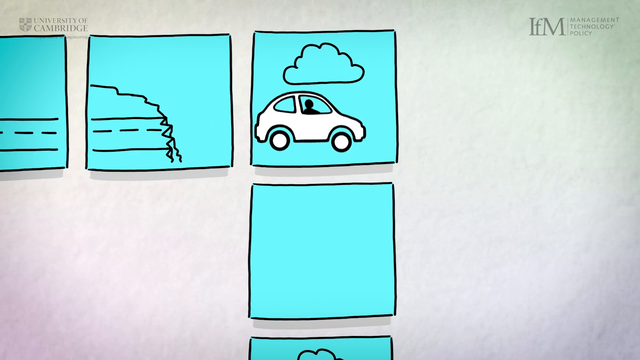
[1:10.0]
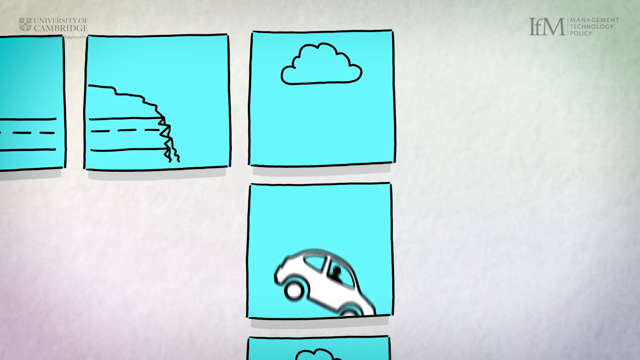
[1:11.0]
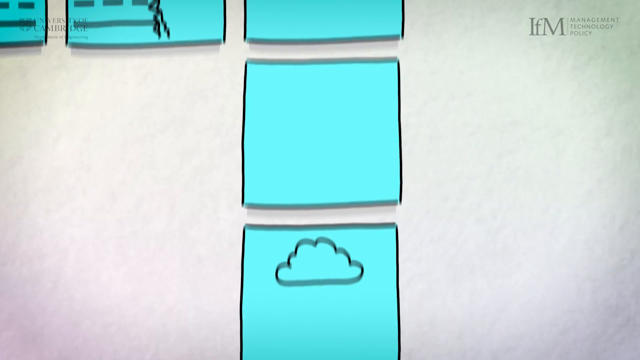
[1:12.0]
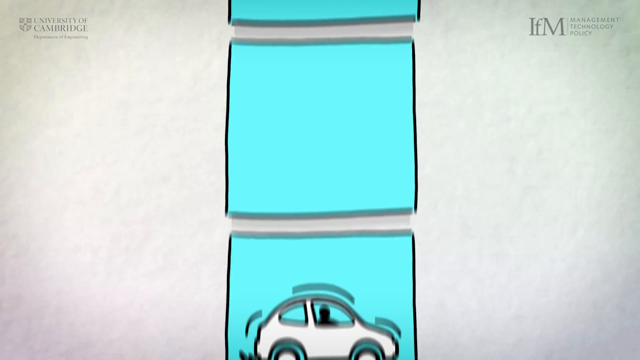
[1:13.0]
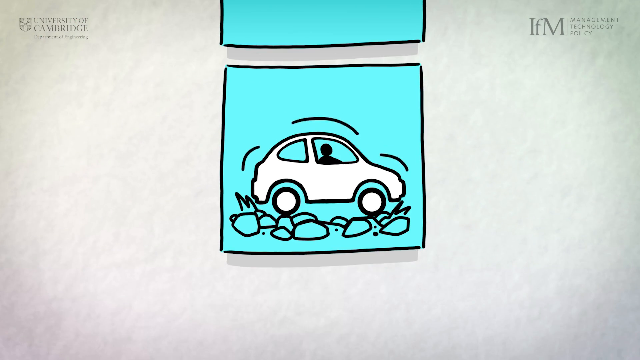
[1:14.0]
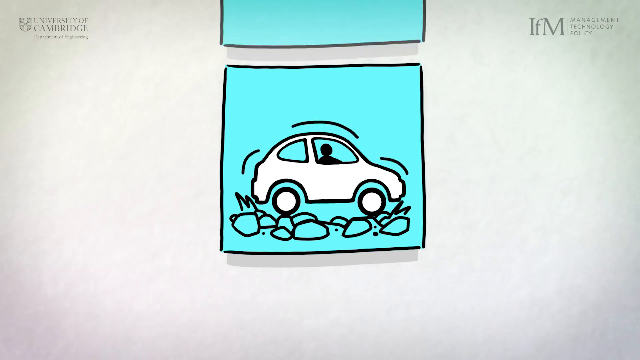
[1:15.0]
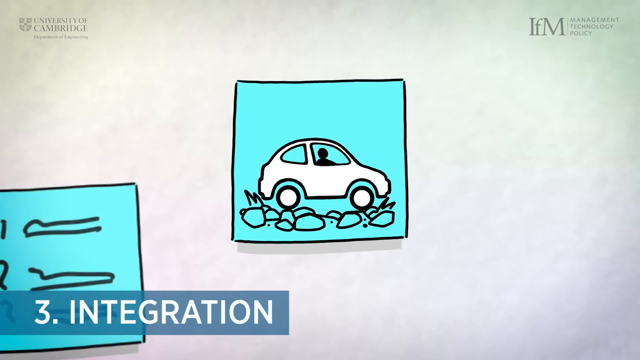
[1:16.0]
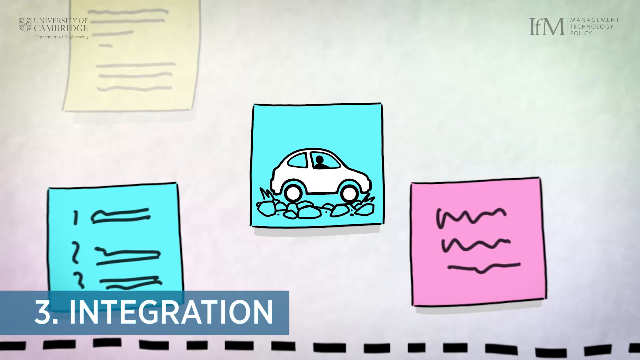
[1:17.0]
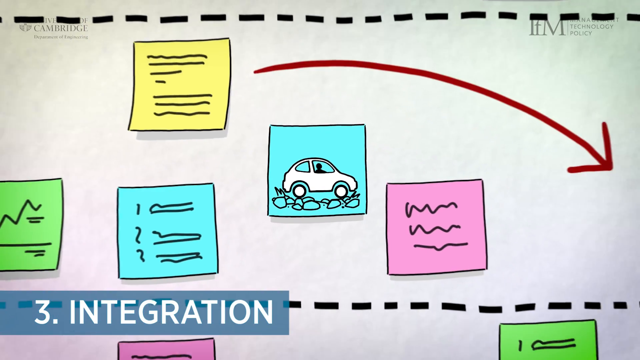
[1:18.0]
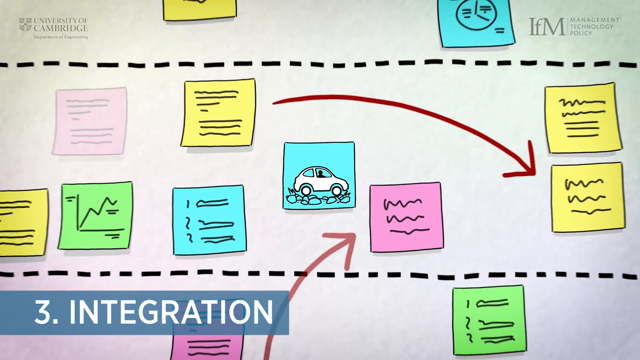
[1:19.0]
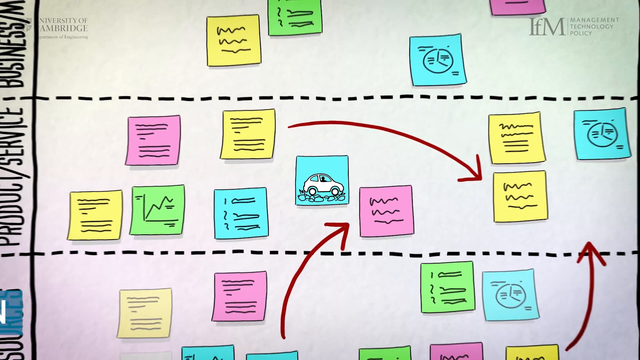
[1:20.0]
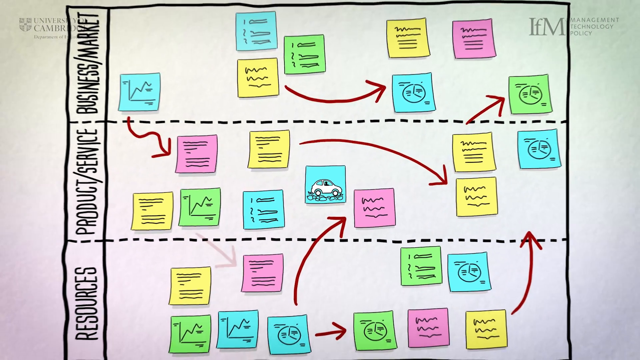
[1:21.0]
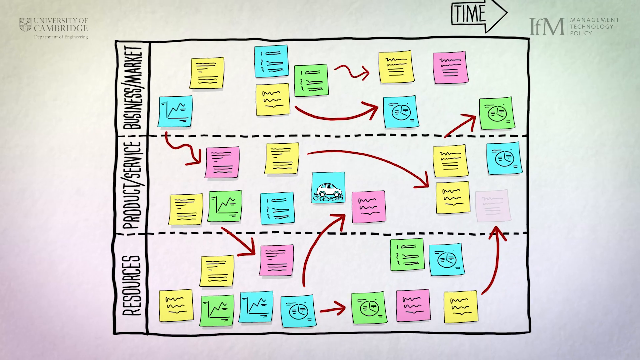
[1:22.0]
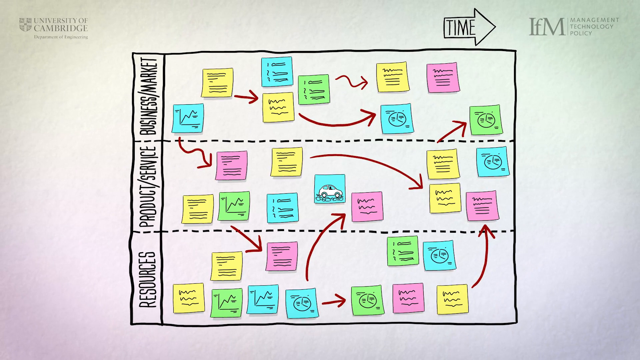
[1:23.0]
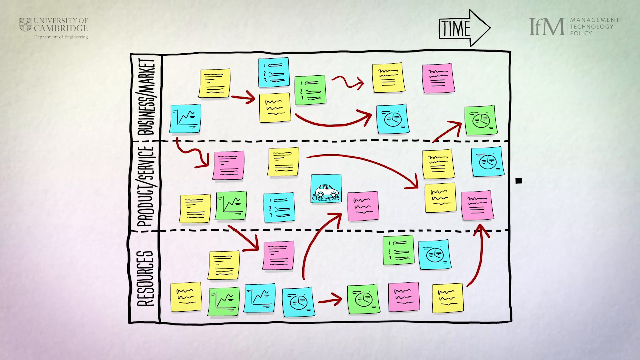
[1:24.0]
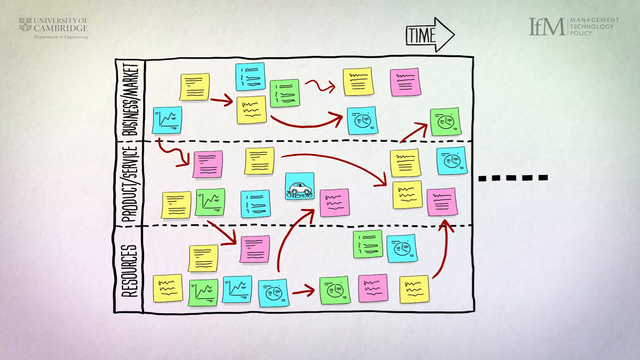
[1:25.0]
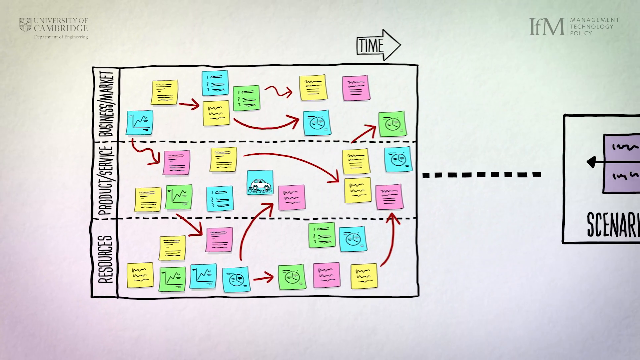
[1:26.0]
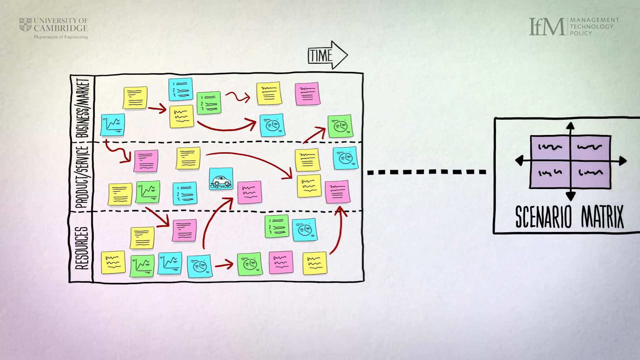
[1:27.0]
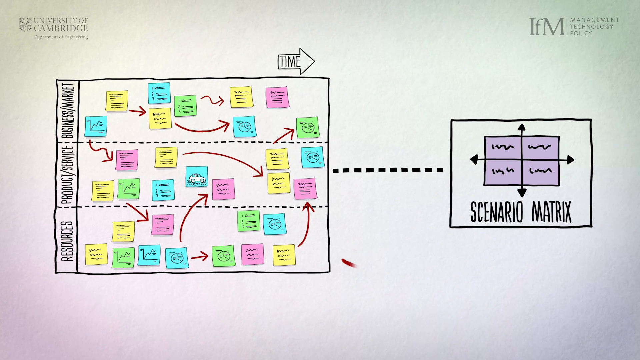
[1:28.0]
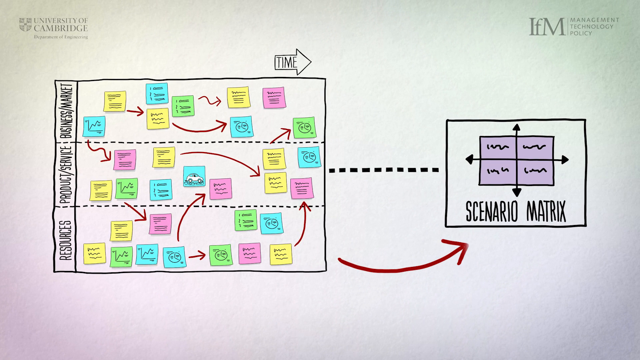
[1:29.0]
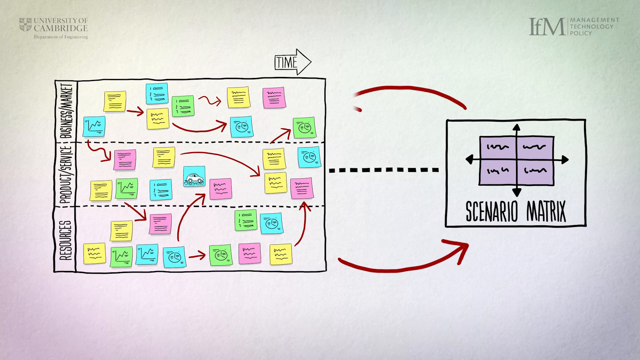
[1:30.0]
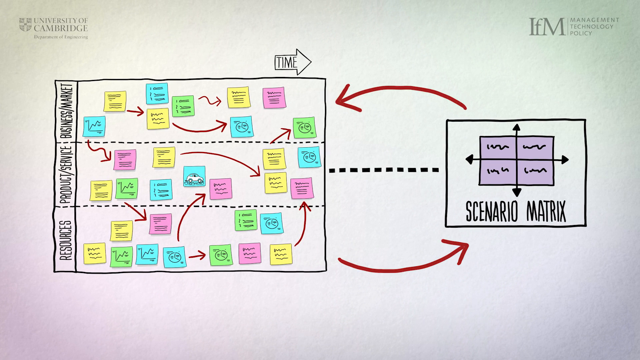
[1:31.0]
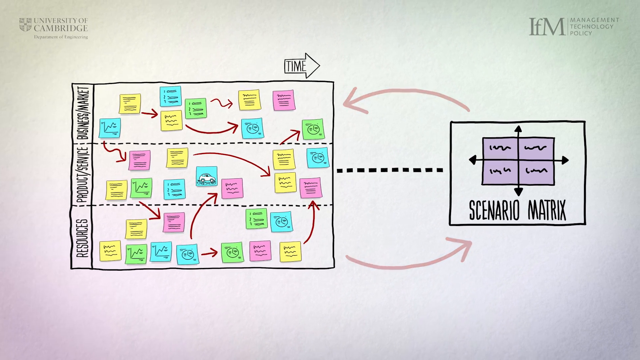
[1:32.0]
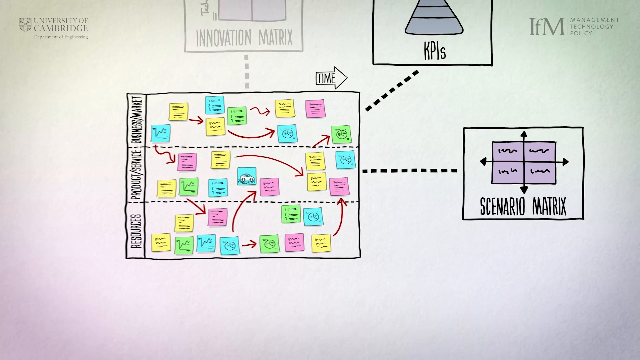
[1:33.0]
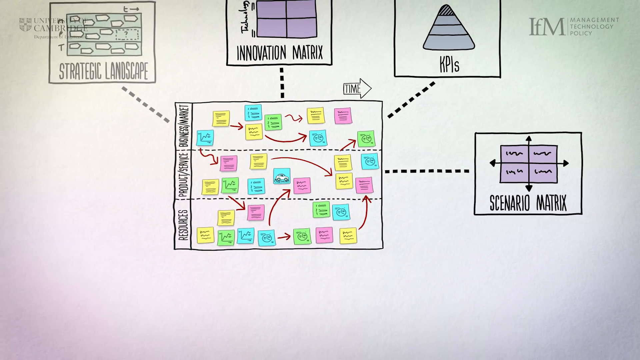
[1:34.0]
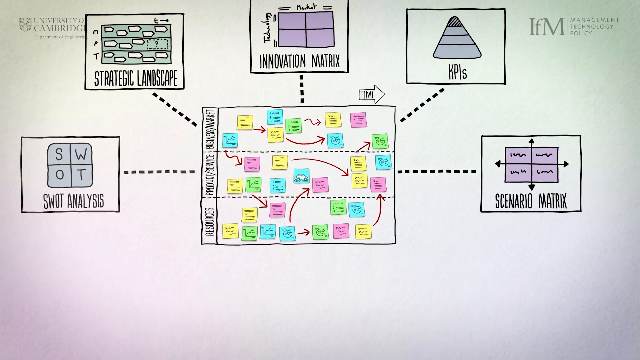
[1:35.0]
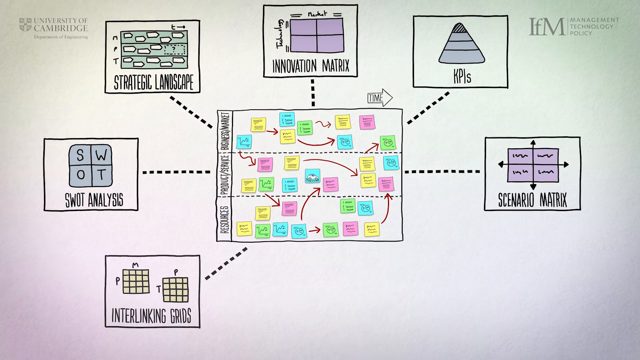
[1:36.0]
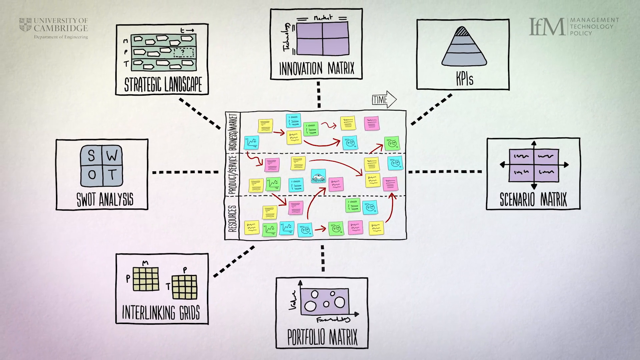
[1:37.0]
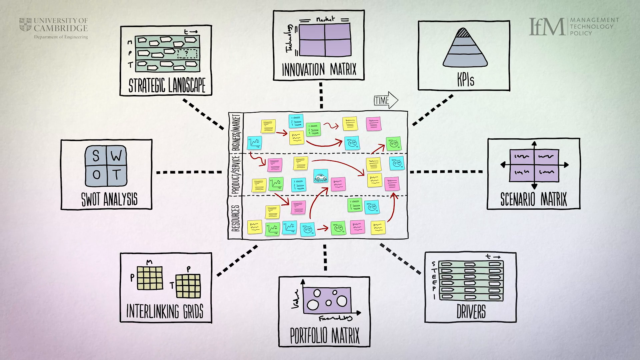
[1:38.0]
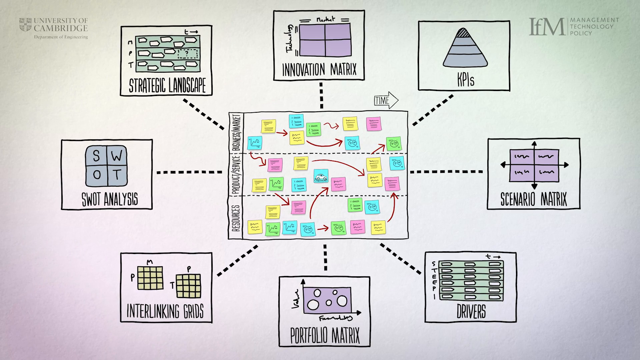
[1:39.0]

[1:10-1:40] Three and a half Post-it notes are shown at first. One has a car with a cloud over it, and the other two have drawings of what appears to be a broken road or a road that ends. The car is then shown falling all the way down to the bottom of the screen, and the cartoon drawing suggests the car may have crashed and is having some kind of problem. The video then zooms out back to the collage of Post-it notes broken up into segments such as business, product, and resources. The car Post-it note falls into the product category.